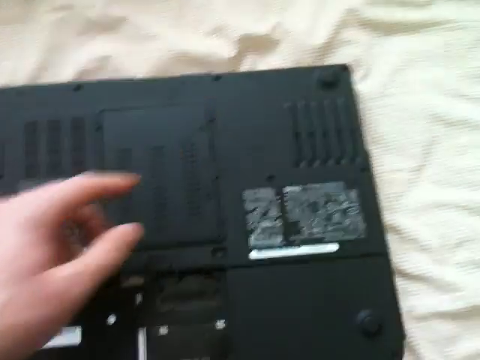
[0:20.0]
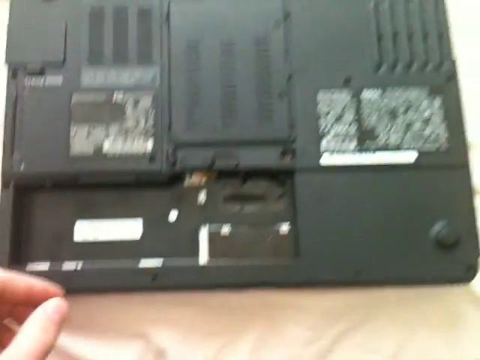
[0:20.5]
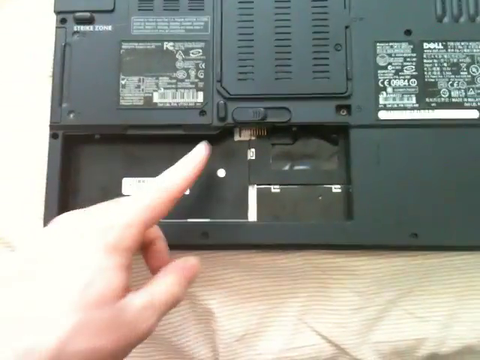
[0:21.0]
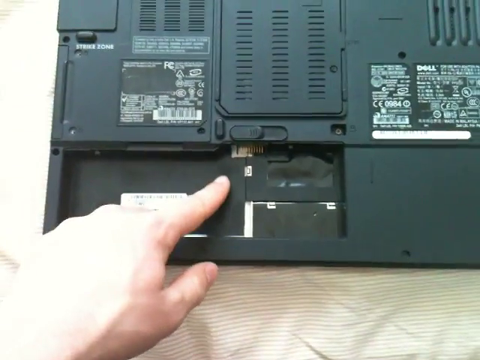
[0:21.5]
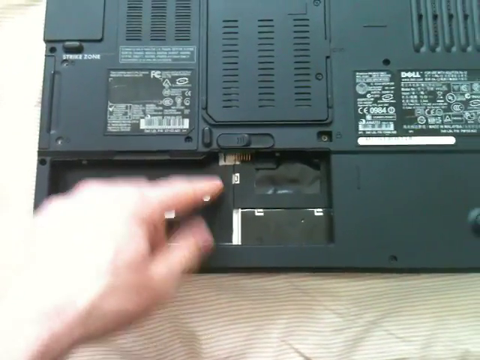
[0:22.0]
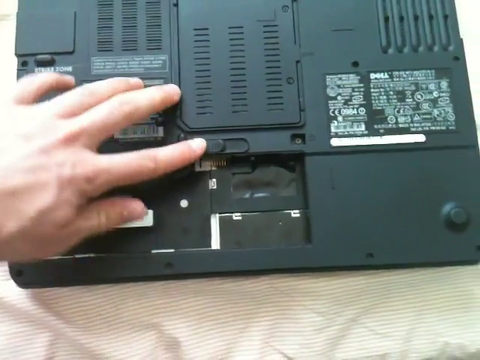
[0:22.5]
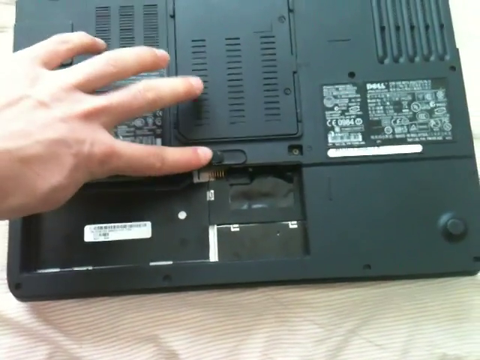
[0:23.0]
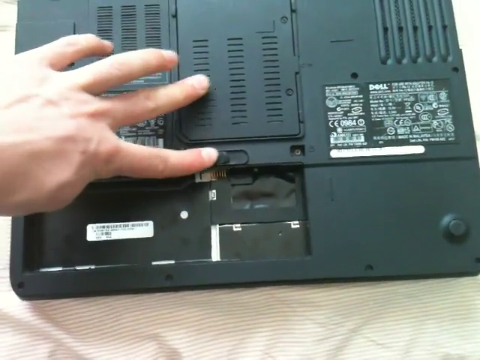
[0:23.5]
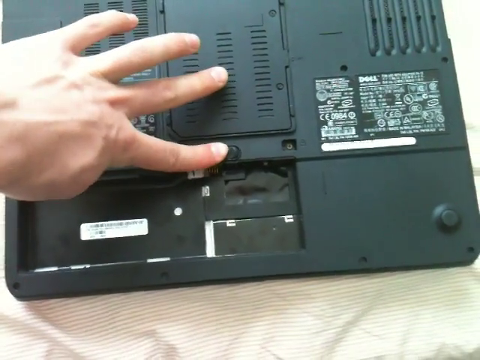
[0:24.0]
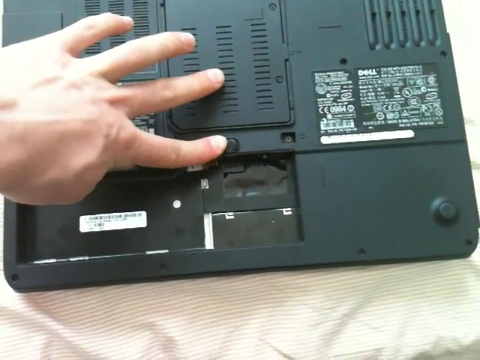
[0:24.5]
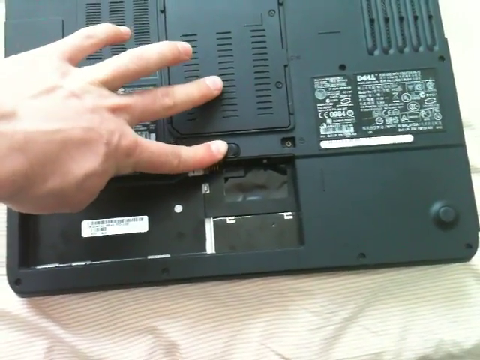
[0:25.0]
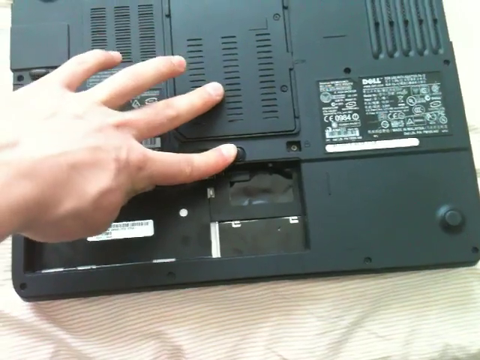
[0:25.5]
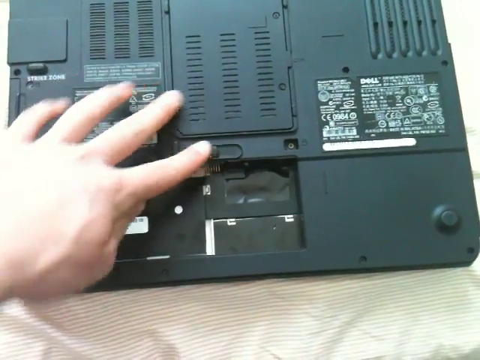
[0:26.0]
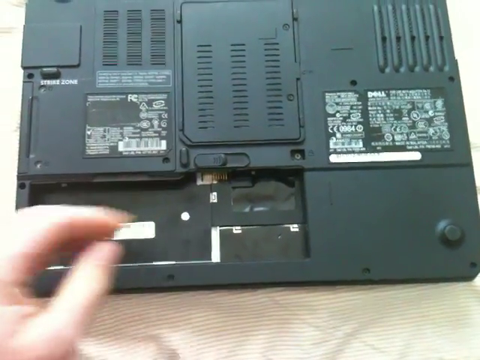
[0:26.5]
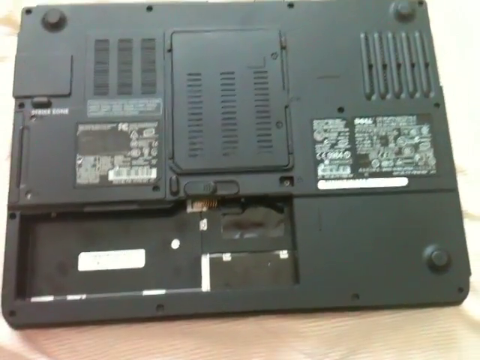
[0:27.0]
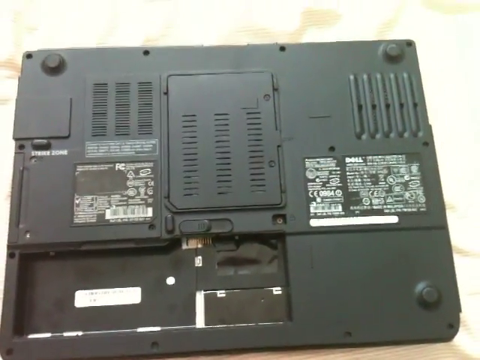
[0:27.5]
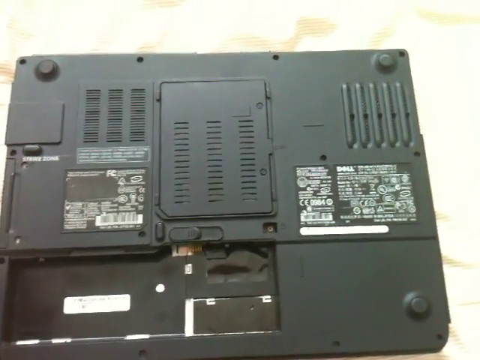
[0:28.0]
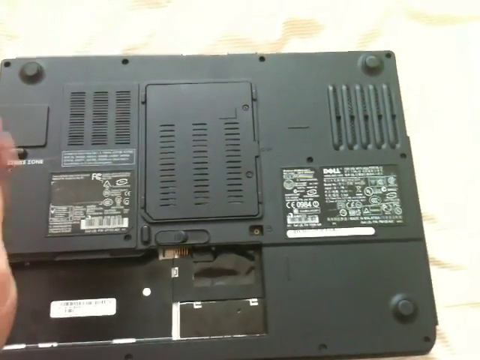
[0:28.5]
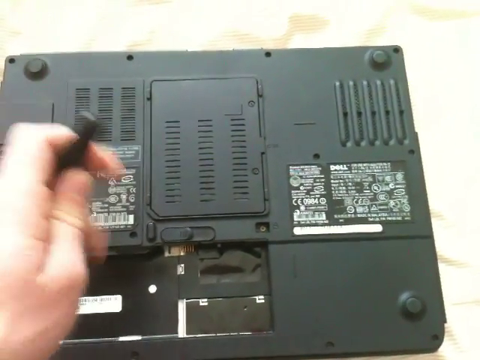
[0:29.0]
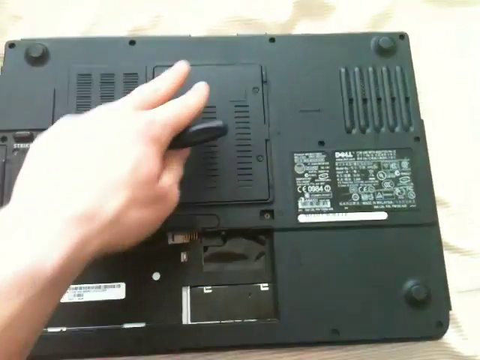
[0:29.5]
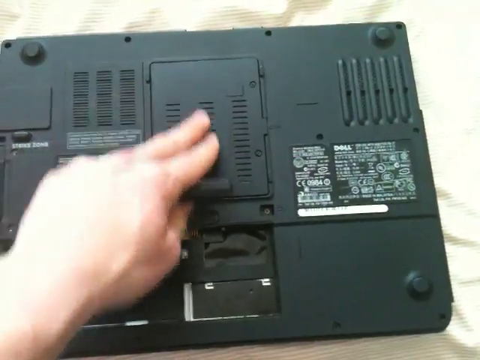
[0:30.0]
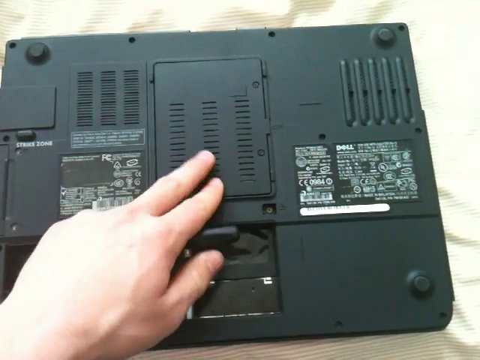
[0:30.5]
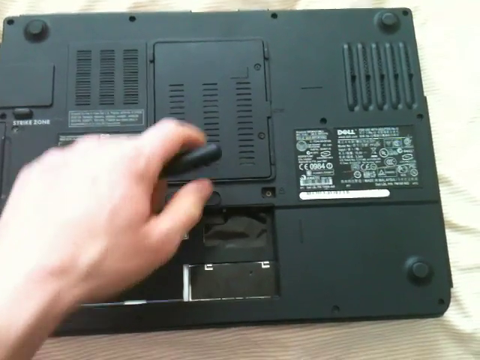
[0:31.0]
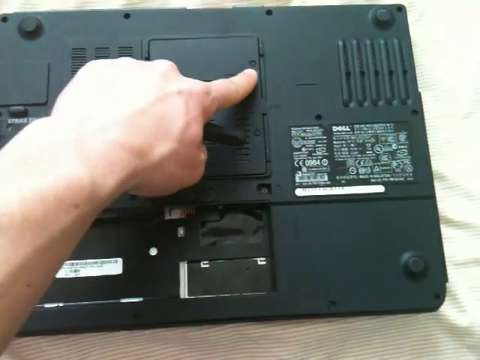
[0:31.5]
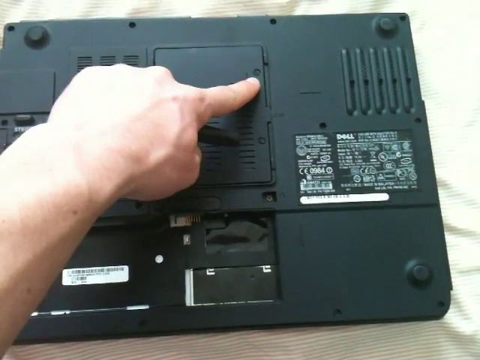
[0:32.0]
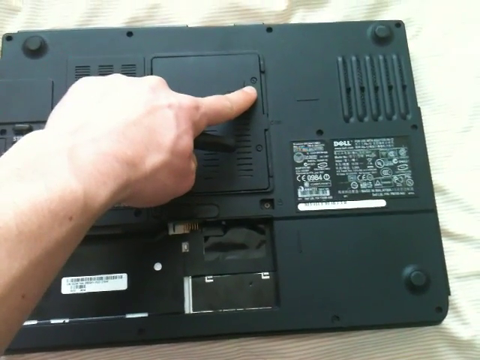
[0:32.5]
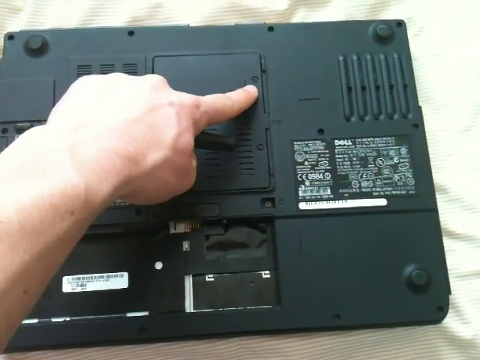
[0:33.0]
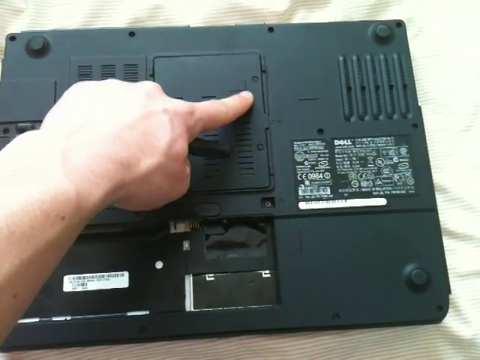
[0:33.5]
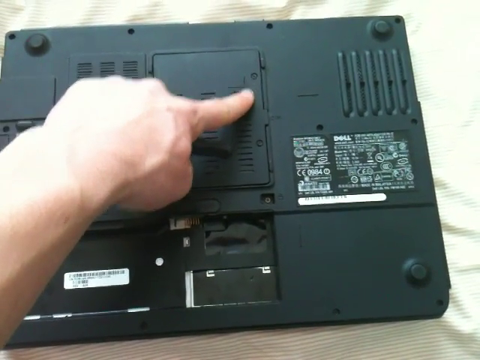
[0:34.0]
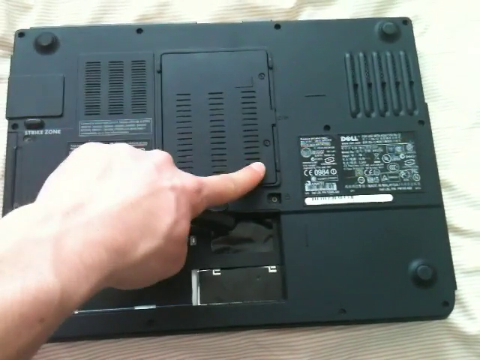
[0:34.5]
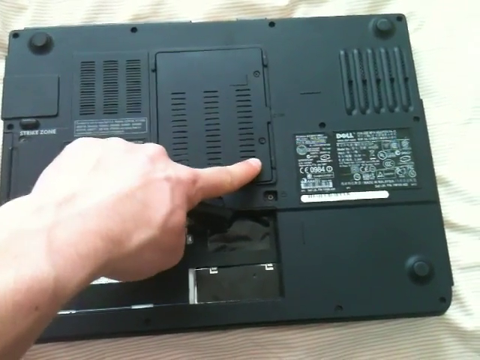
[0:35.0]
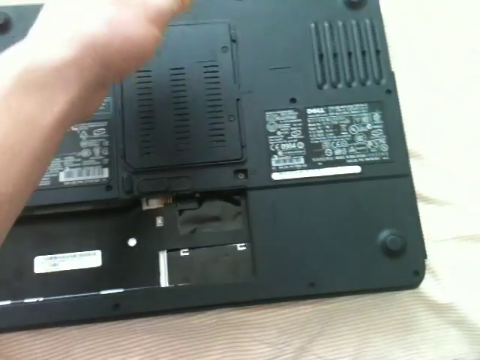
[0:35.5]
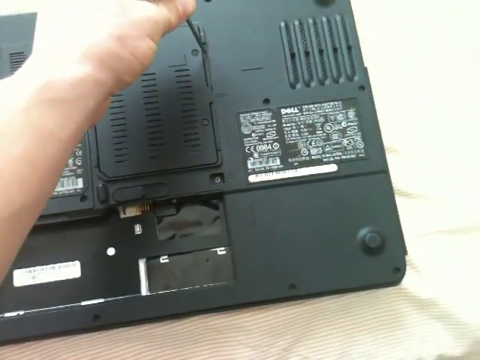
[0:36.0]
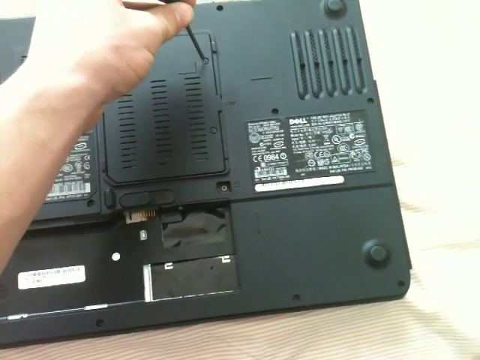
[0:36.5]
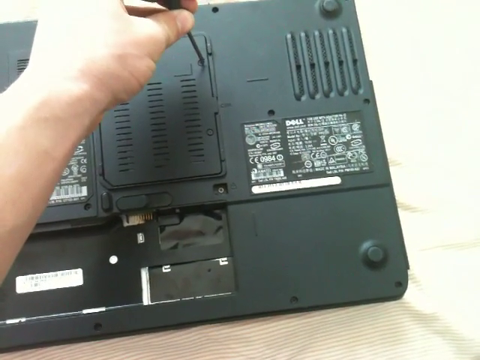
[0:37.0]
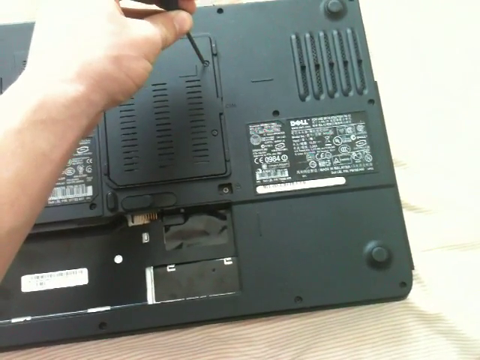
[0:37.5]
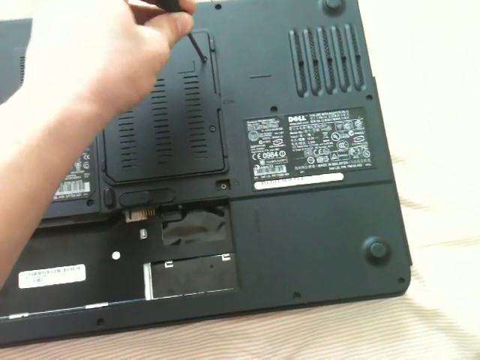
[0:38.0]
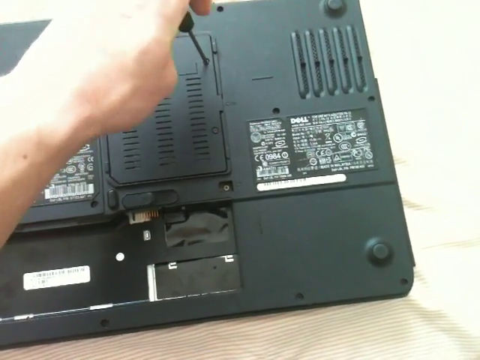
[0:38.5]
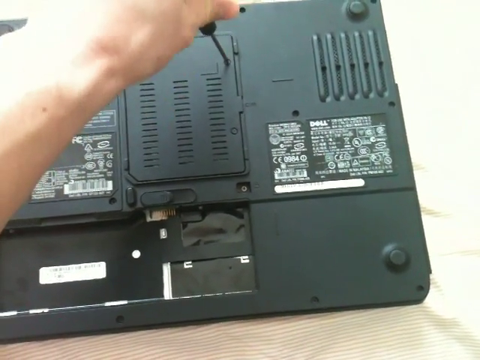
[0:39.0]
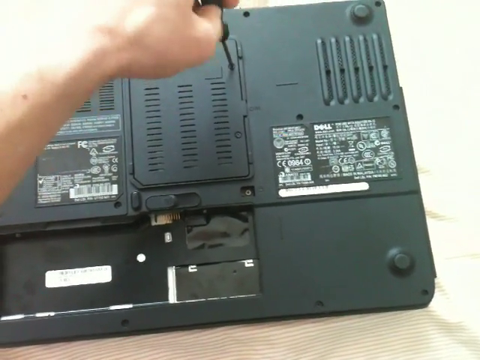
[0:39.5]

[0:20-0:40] The man shows a button that has to be pushed, then takes a black tool and shows the point where the button has been pushed. He uses the tool to open that part, demonstrating on one part of the device how pressing the button and then using the tool opens it.